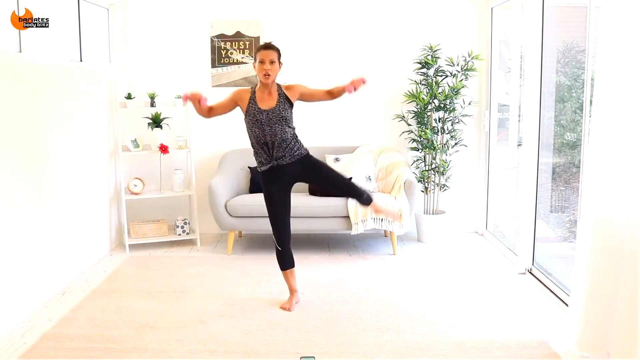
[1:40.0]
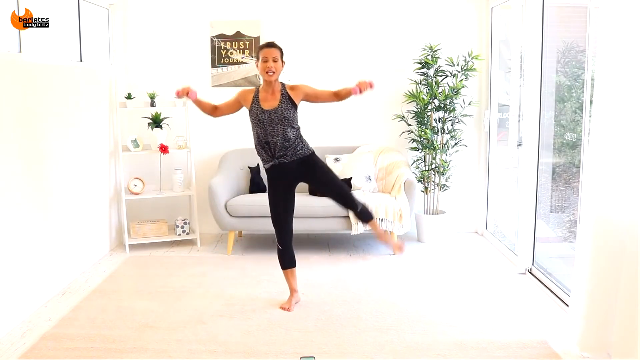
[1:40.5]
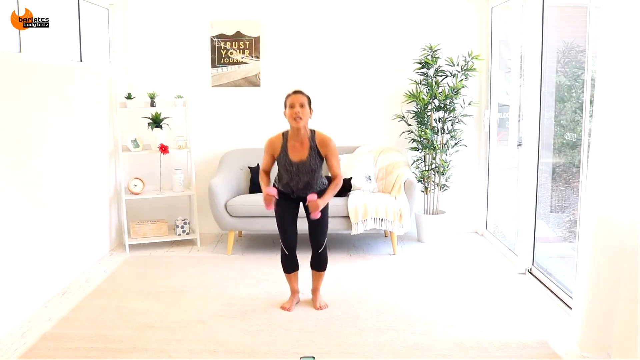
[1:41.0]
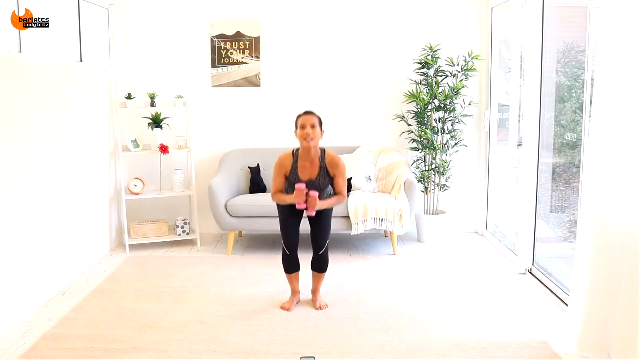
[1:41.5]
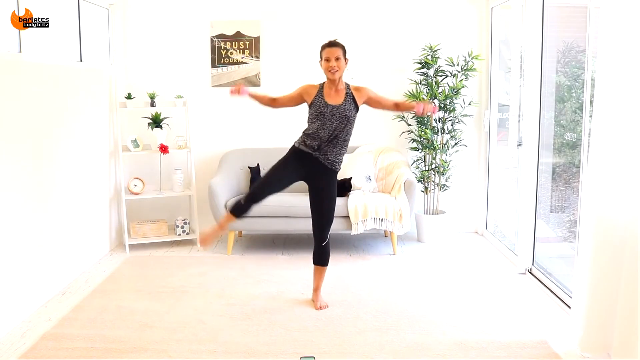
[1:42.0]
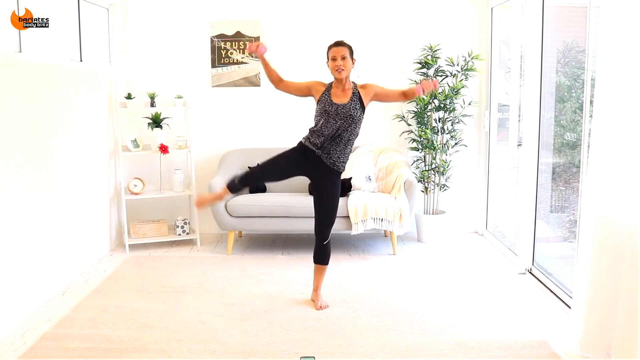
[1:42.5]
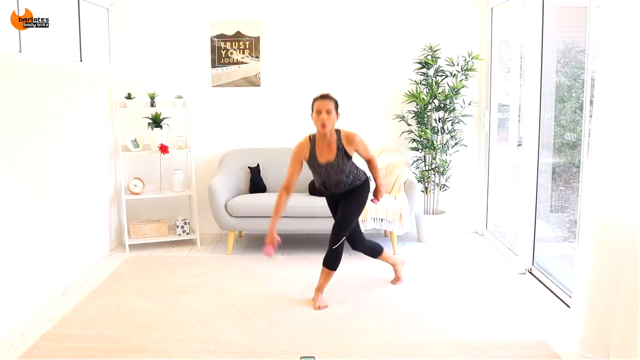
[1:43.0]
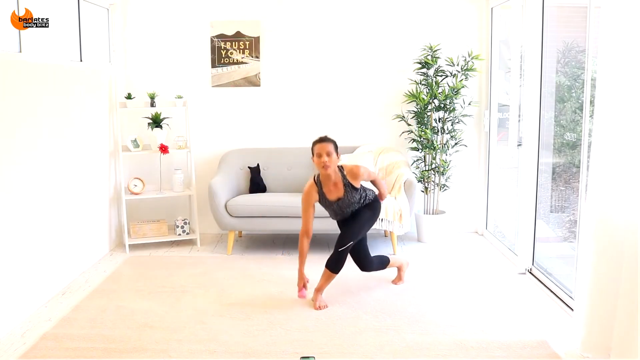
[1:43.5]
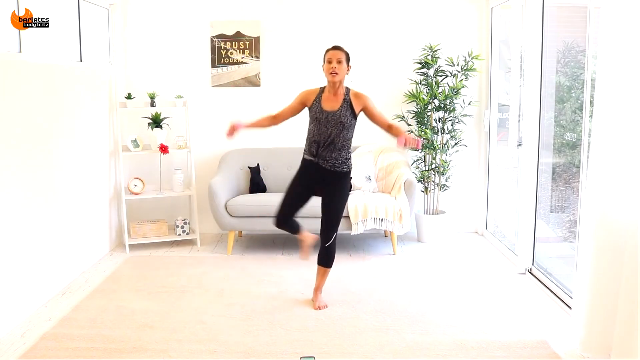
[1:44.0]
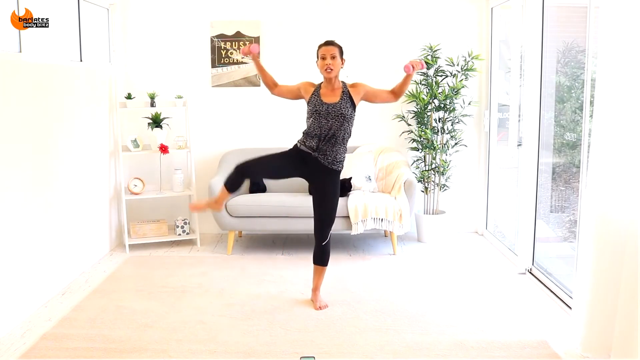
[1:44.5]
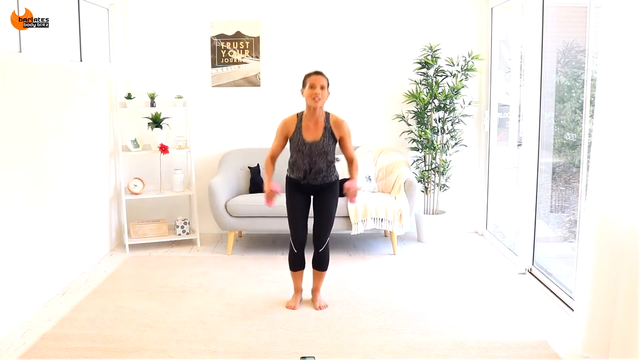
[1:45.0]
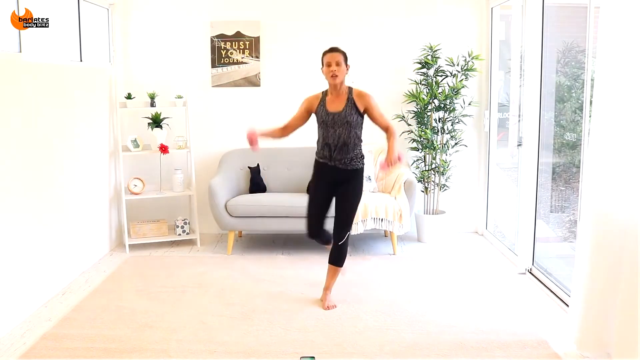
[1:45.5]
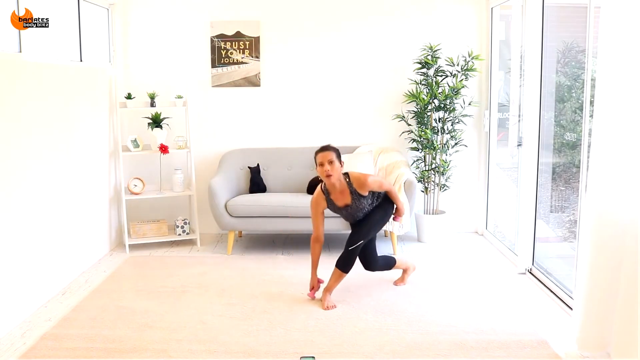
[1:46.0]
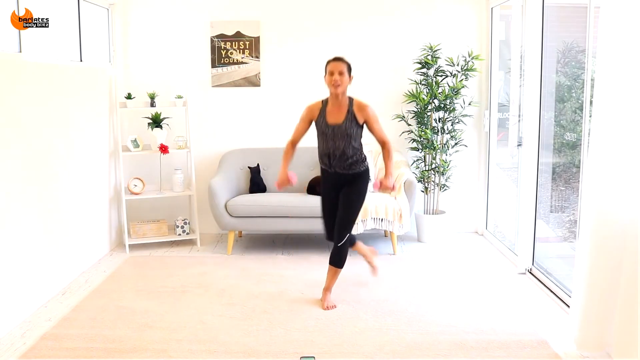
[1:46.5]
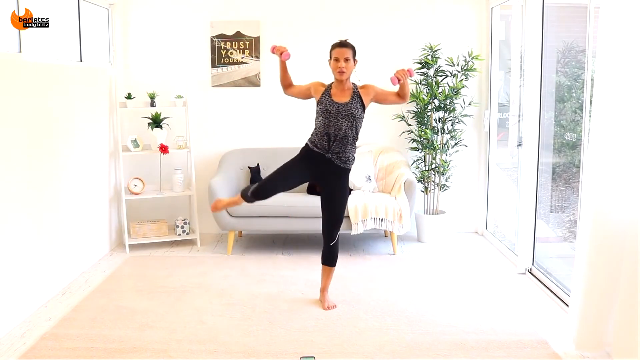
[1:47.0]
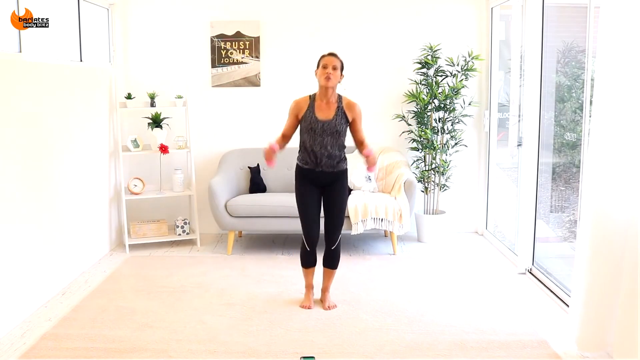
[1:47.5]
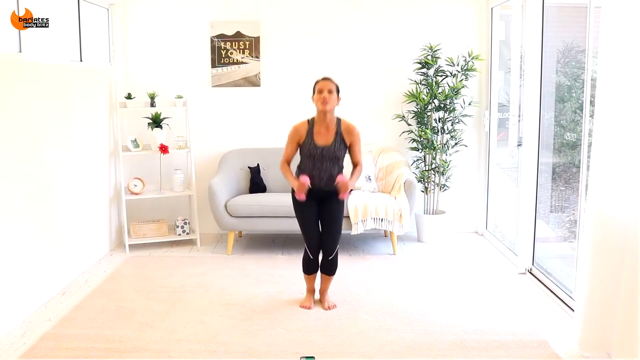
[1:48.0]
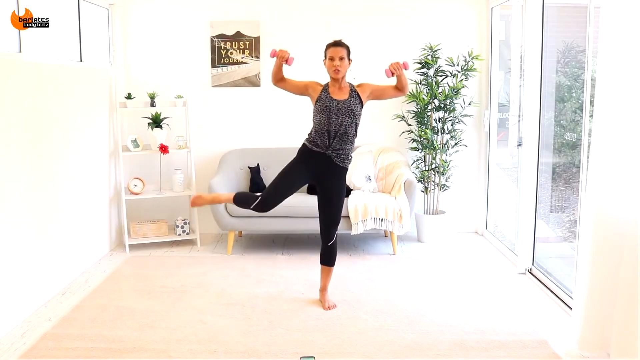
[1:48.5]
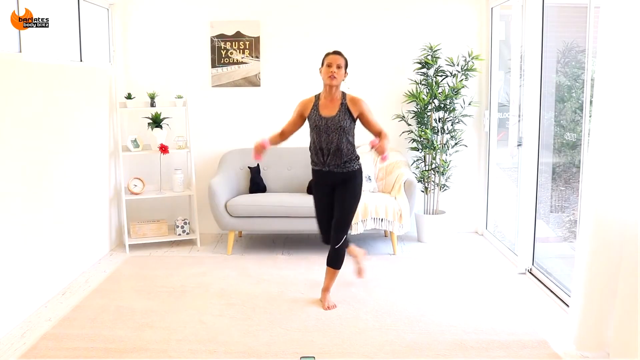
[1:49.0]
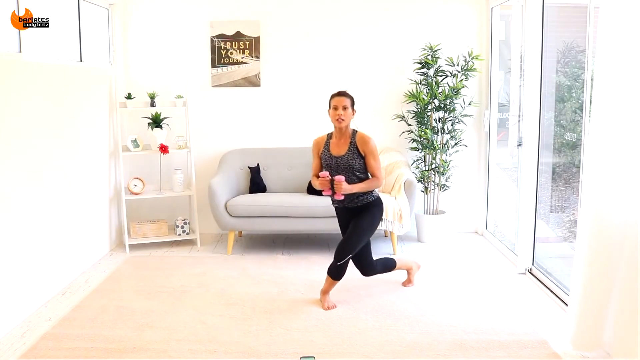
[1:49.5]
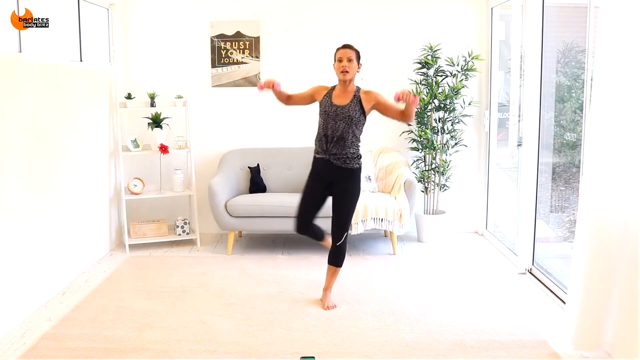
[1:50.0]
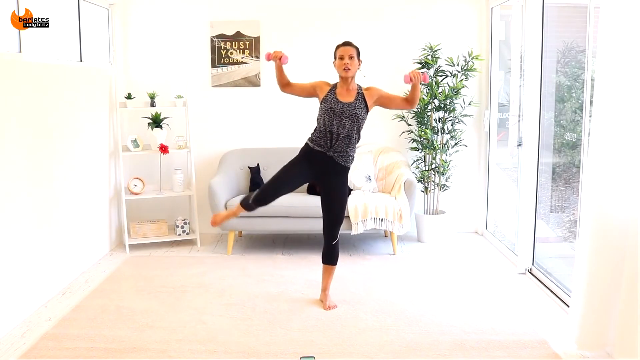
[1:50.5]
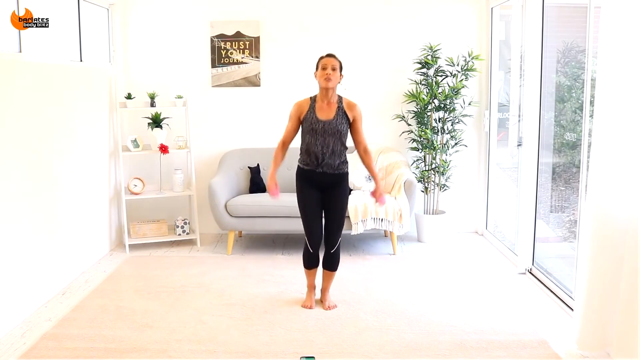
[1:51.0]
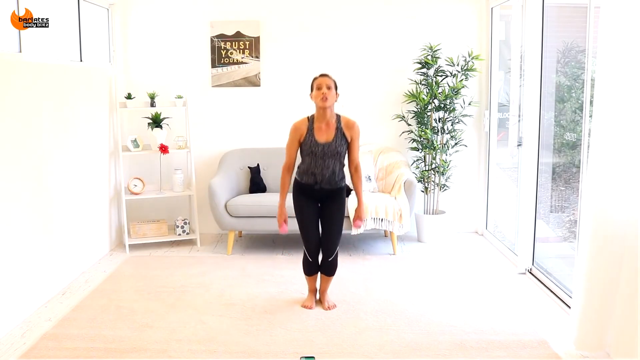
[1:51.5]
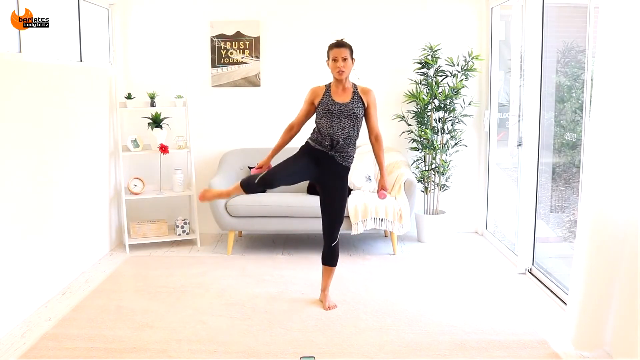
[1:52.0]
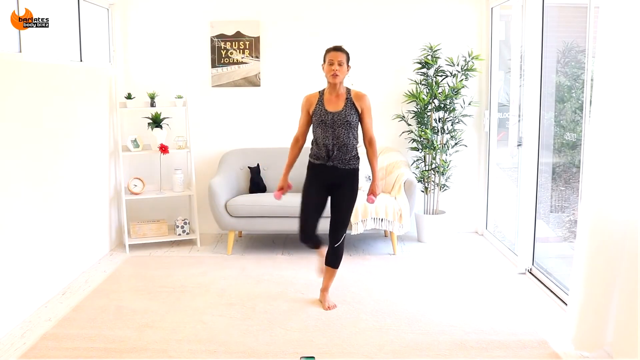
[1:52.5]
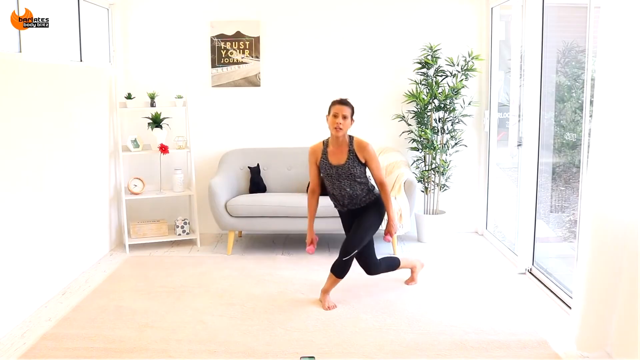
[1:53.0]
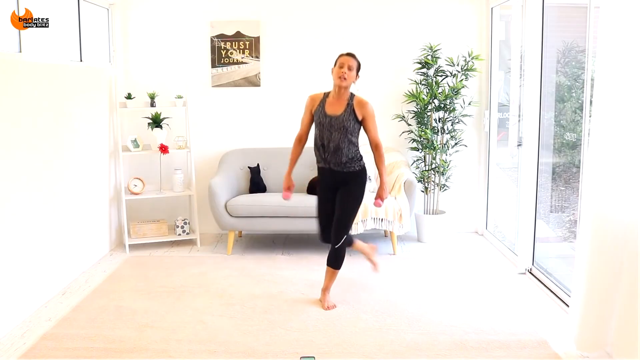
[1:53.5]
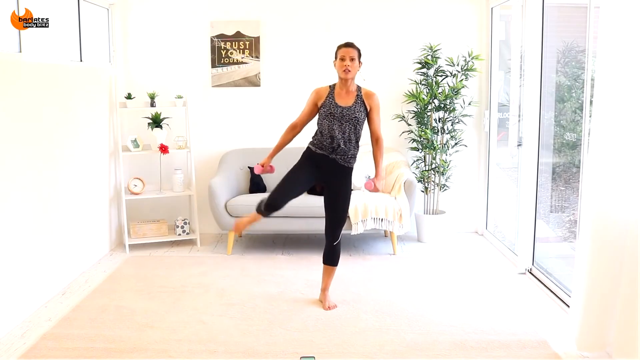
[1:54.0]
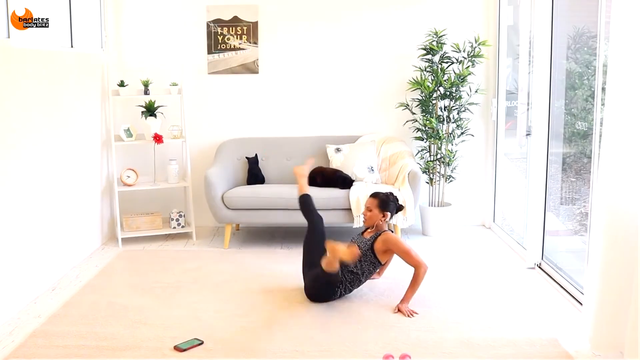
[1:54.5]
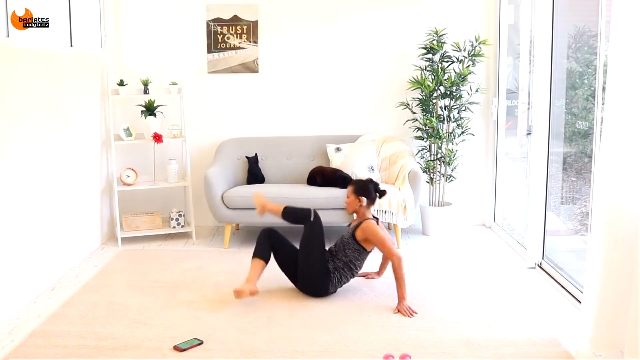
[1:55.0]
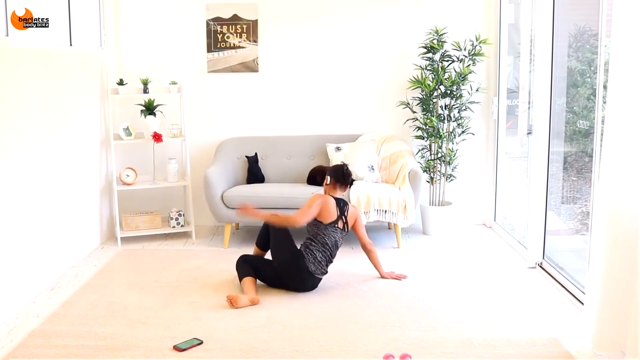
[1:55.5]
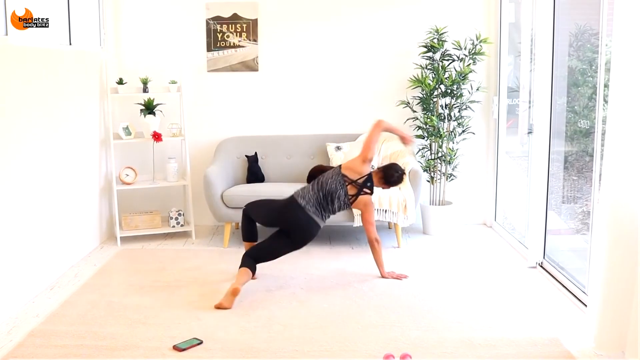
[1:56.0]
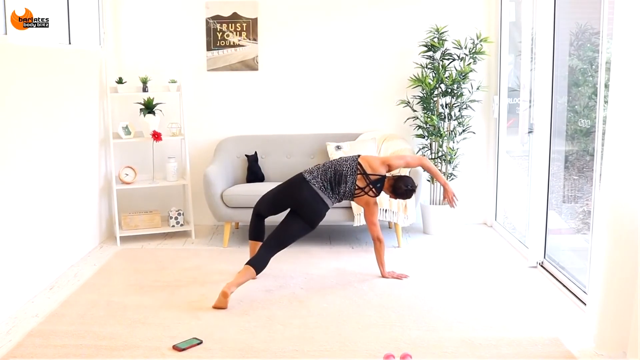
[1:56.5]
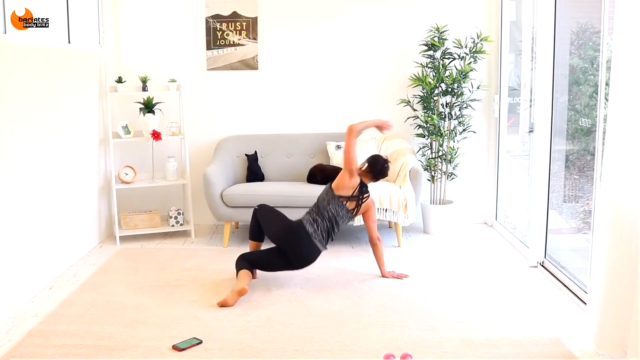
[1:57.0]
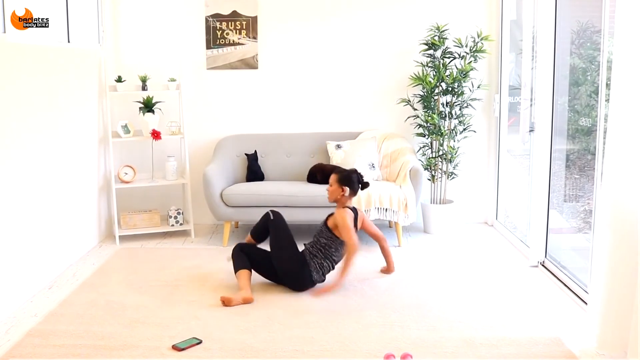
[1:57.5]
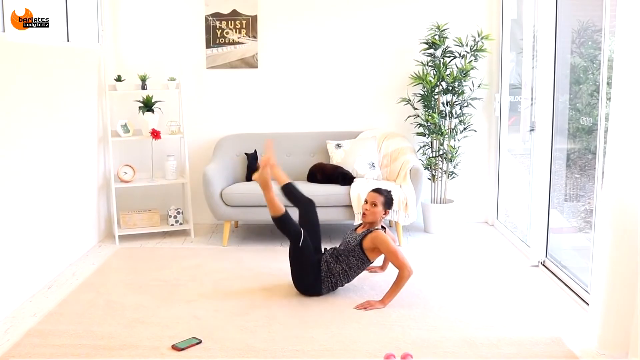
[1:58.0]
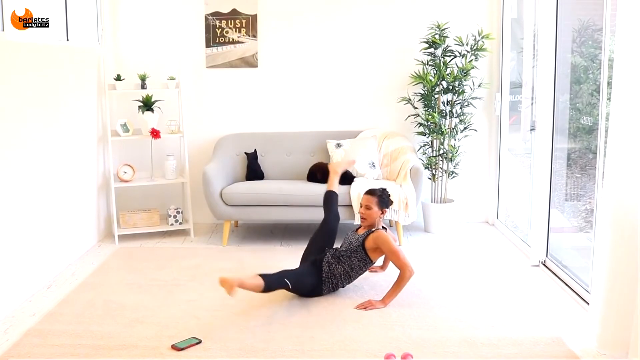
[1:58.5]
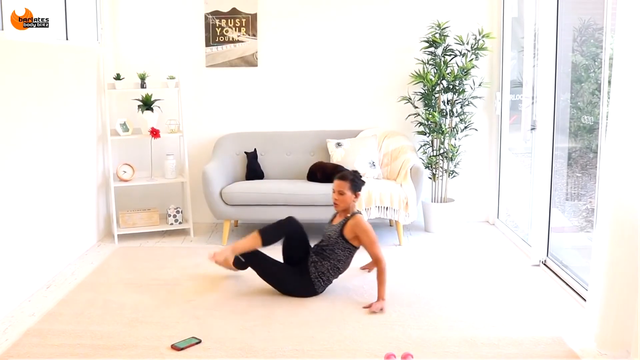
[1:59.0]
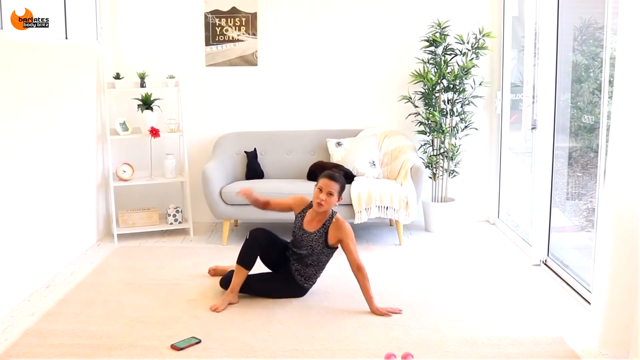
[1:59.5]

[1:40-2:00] The same woman puts together the different lunges: she squats in the middle with her feet together, does a side lunge into a curtsy lunge, and on coming back from the curtsy lunge lifts the lunging leg and does a side crunch. She then moves to the other side and continues the pattern of motions and squats, adding in lifting up her elbows while still holding the two pink weights. After a short break in the video, she is sitting on the floor doing twisting stretching motions and bridges to the side before going into almost a split kick. She alternates sides, first rolling and using her left leg to do a side plank with her arms straight and kick, then switching to her other side and doing the same.